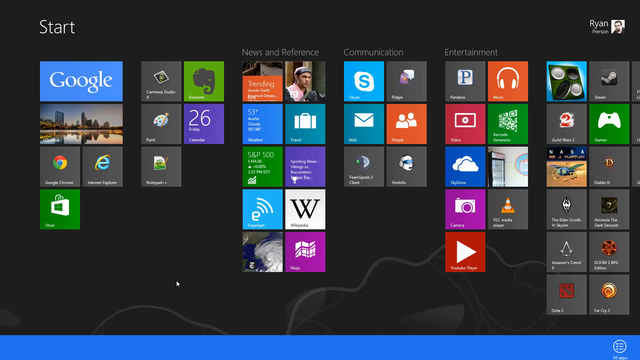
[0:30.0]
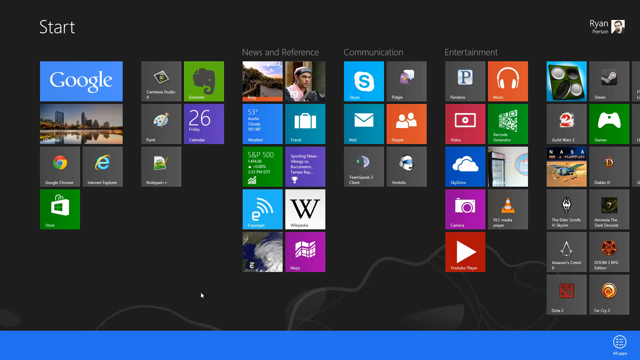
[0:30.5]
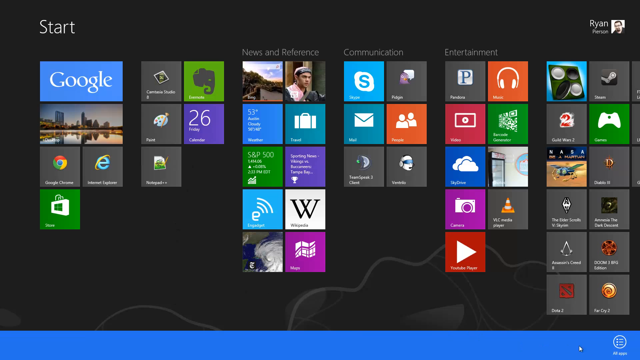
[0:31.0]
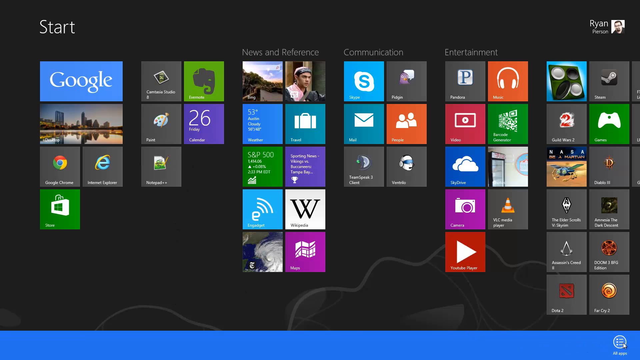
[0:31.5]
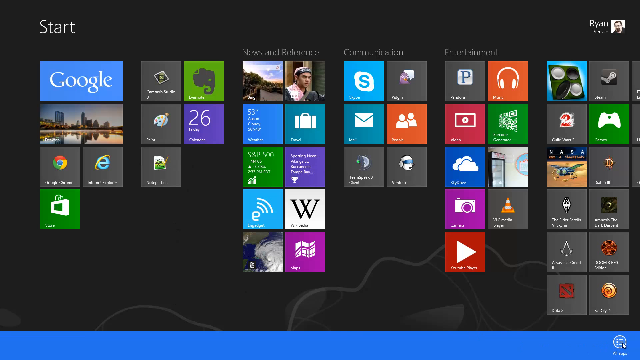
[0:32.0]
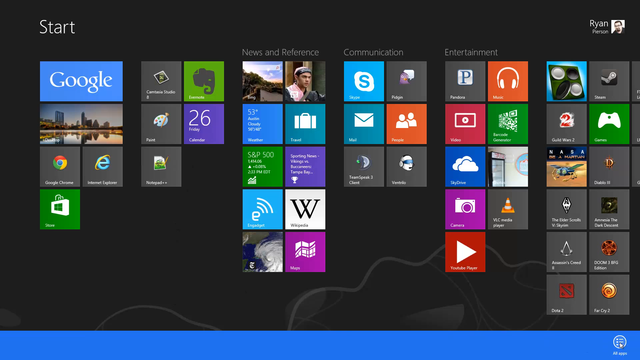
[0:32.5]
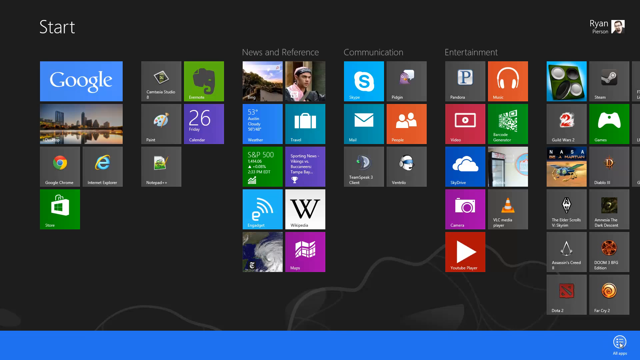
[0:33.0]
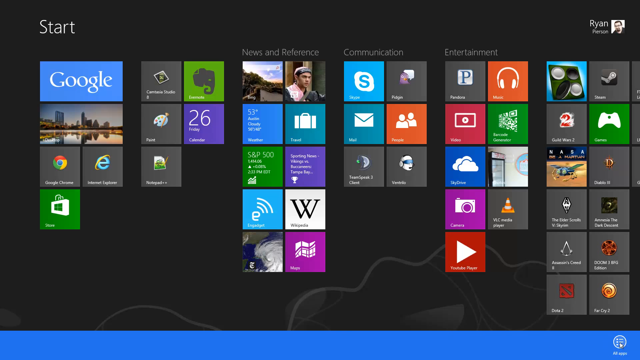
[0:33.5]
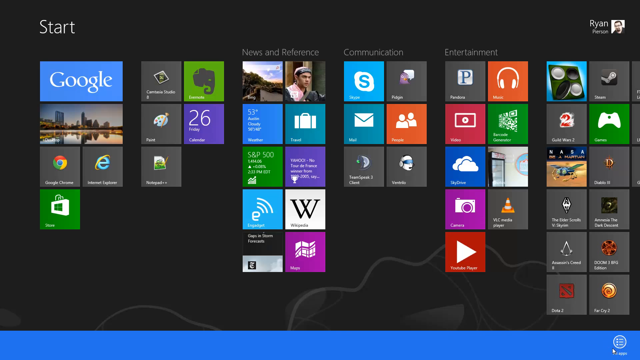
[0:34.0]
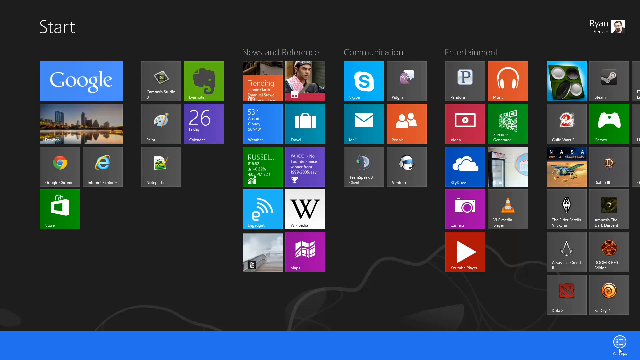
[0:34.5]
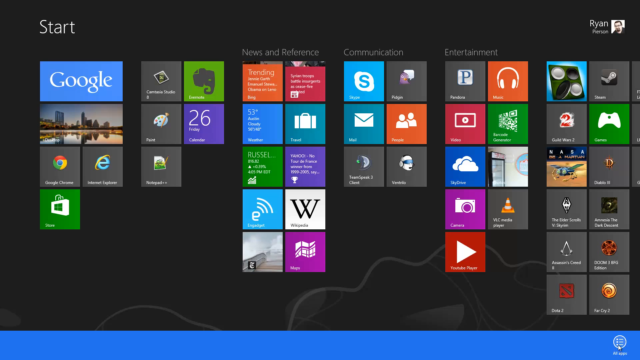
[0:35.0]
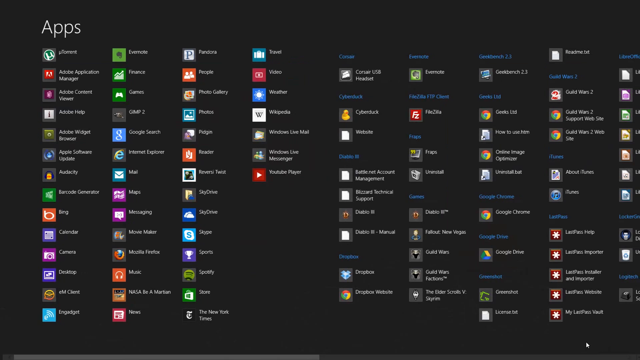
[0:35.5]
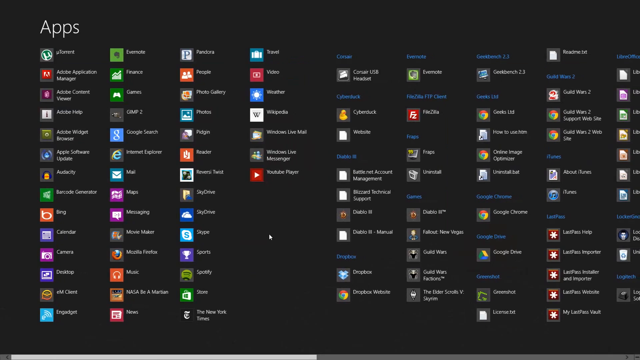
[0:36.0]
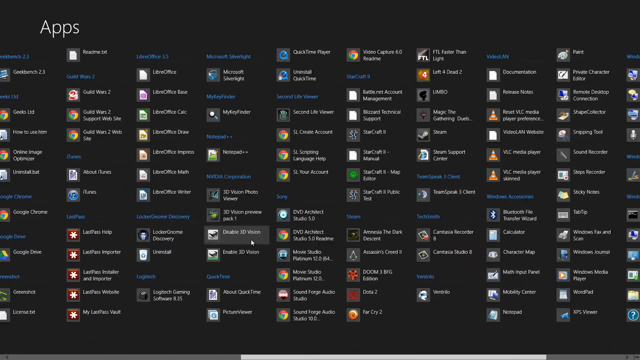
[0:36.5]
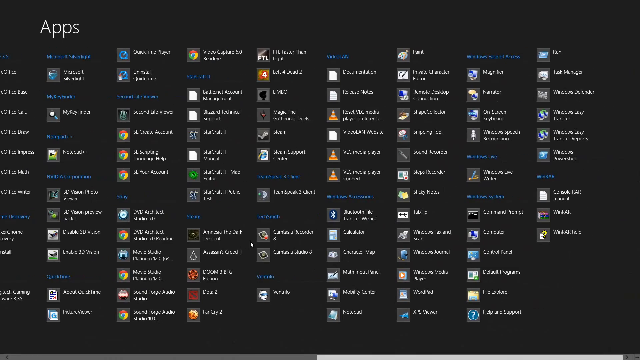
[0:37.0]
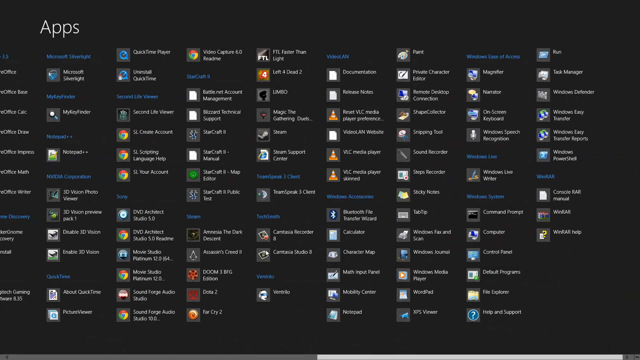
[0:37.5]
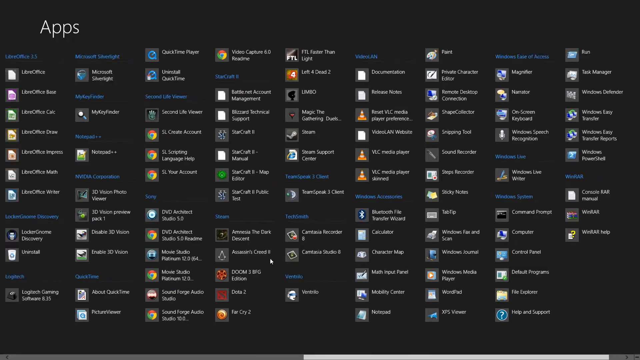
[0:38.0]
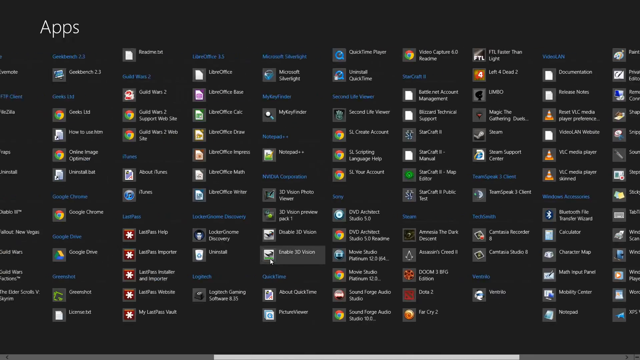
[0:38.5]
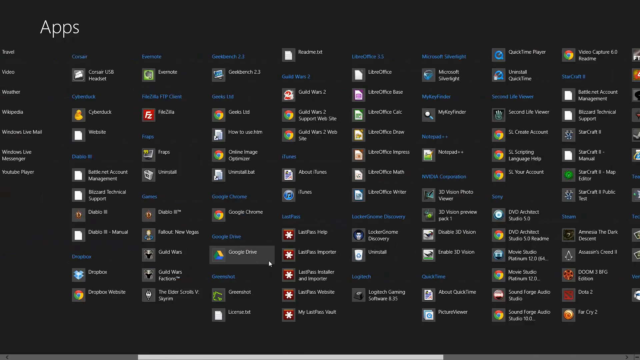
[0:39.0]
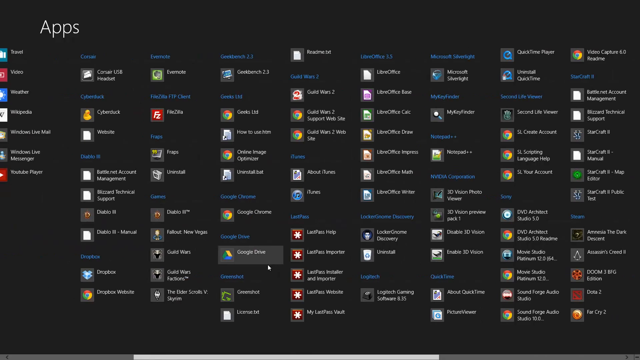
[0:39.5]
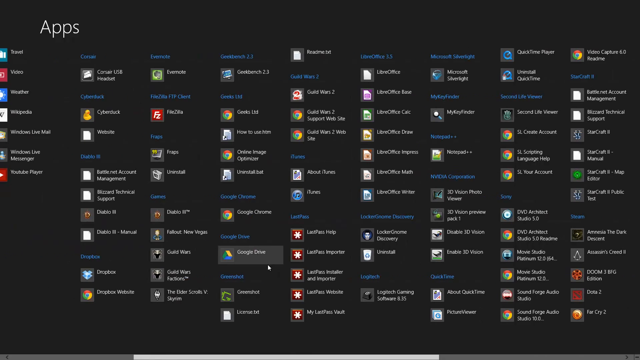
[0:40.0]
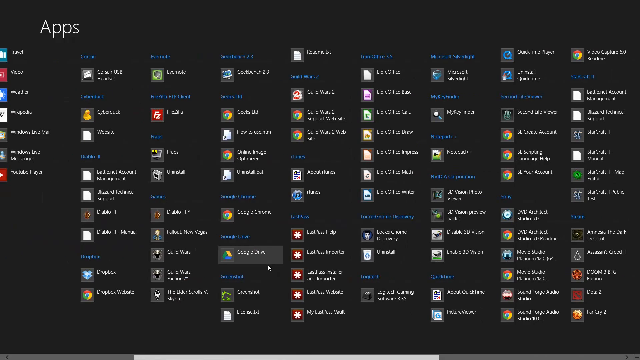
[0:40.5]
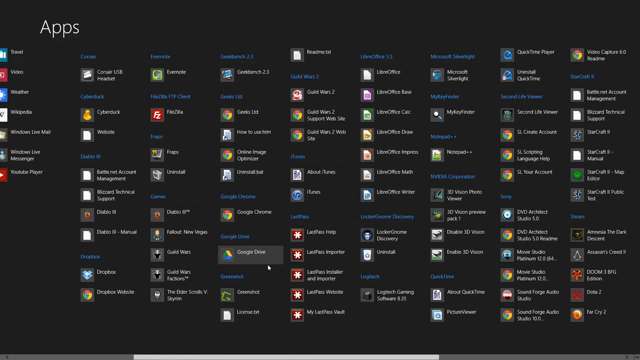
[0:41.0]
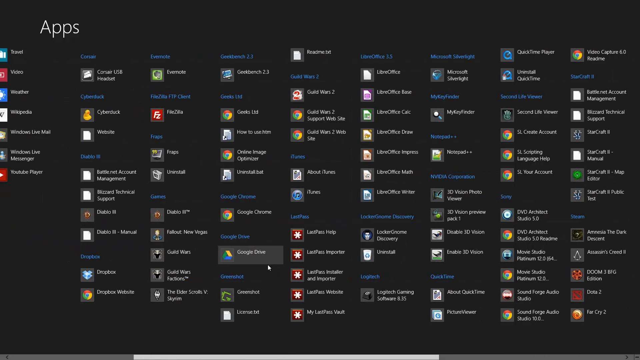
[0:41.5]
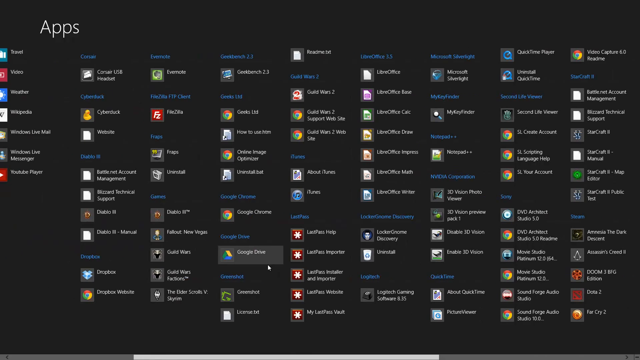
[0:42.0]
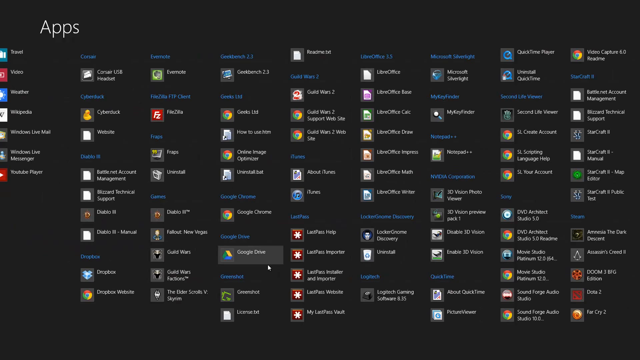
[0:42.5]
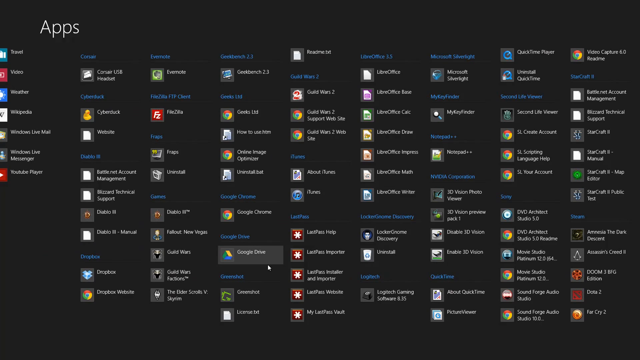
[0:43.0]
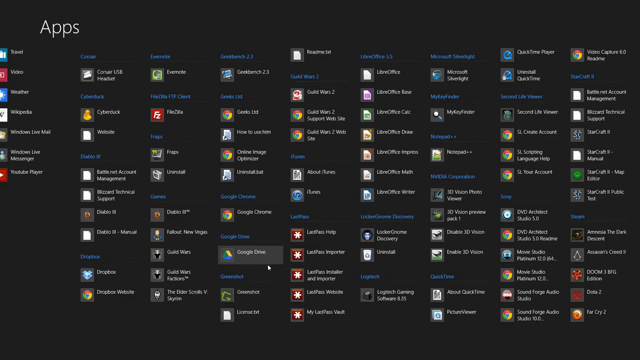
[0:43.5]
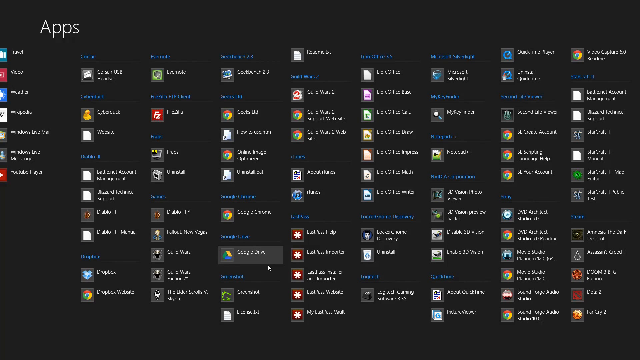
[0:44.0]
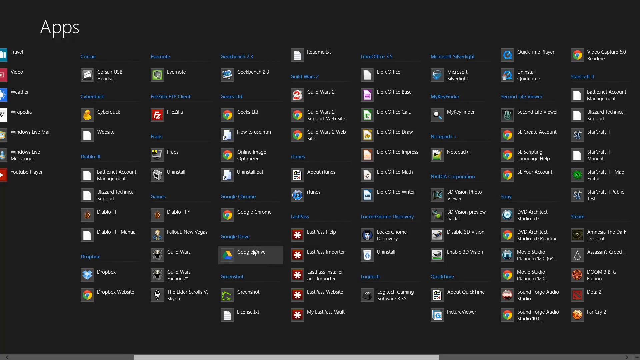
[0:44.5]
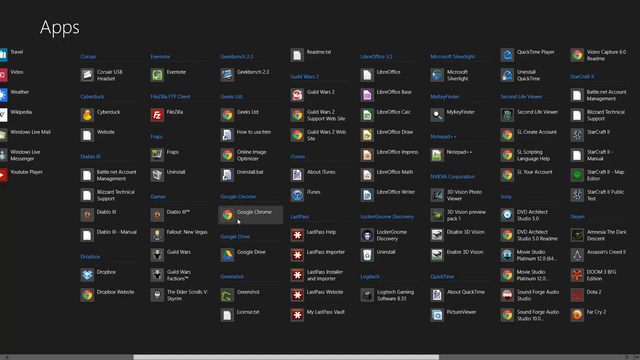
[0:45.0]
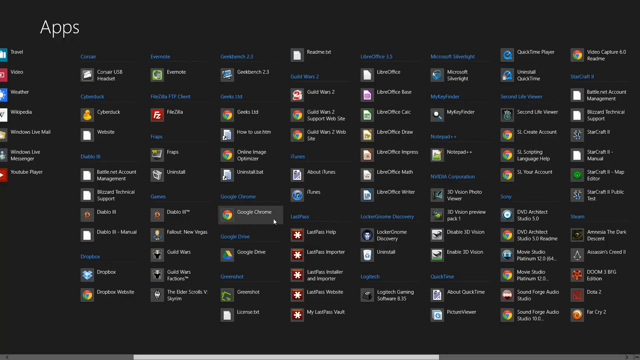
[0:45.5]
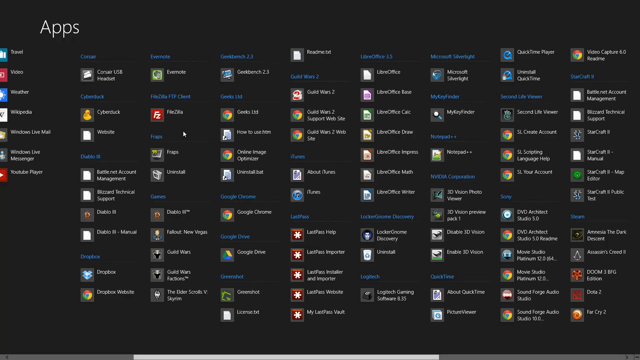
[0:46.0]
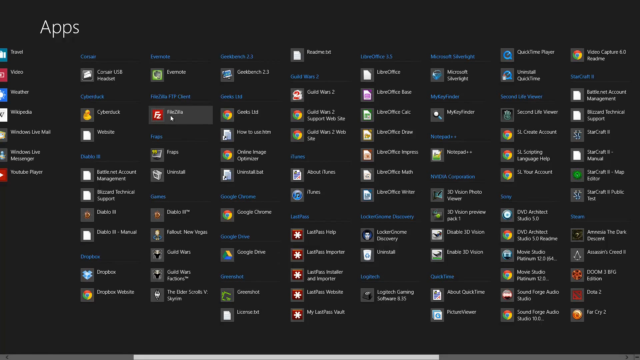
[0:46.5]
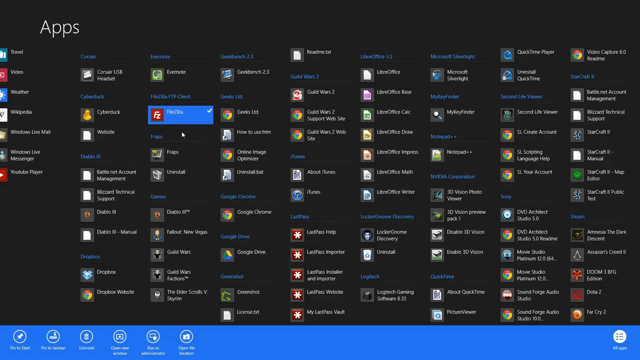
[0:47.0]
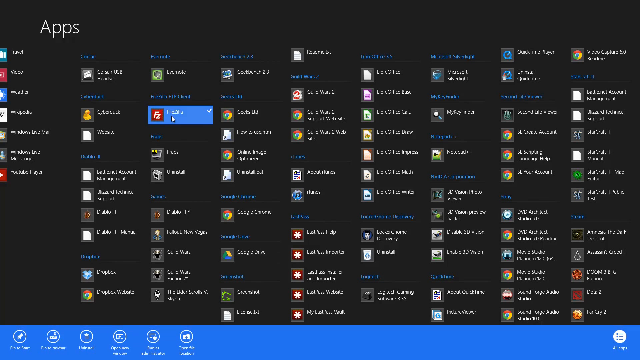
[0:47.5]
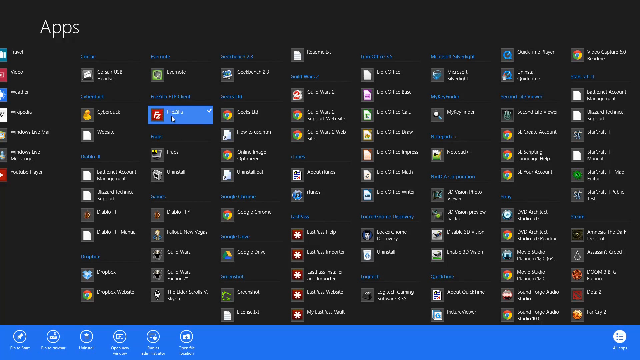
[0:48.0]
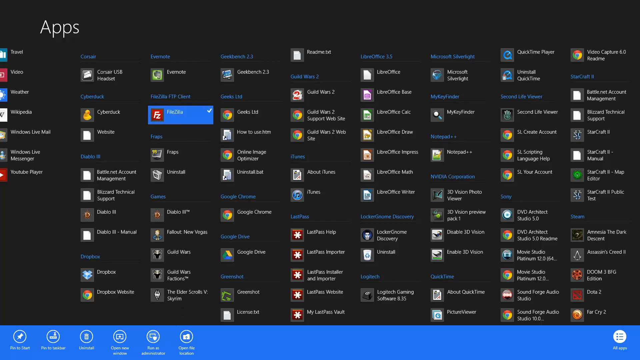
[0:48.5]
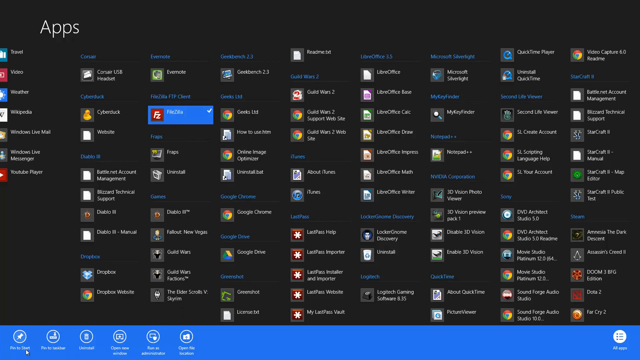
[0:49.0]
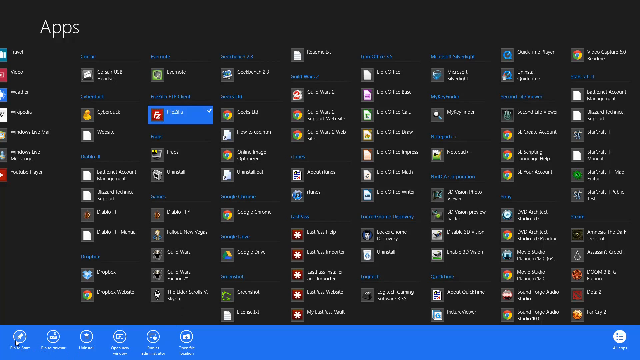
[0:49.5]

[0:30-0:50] The same screen with the flat background and tiles for all the different apps is shown, and some of the live tiles are still moving. A blue bar appears, and then the app screen opens, showing all of the user's different apps on a black background. Each app has its own icon with text to the right of it, arranged in different columns, with a big "apps" title above the icons in the top left corner. The man scrolls through the apps horizontally and then scrolls back. He hovers over one of the apps, which shows a light grey highlight, then does the same for Chrome and then FileZilla. He clicks on FileZilla, and it highlights blue with a tick in the top right corner of the app.